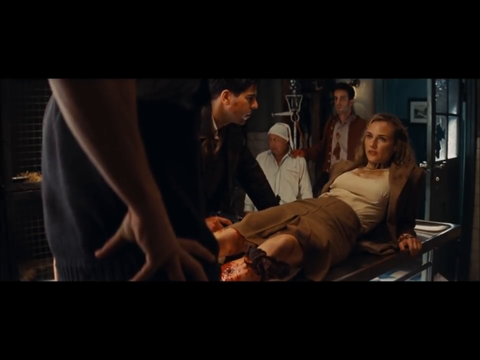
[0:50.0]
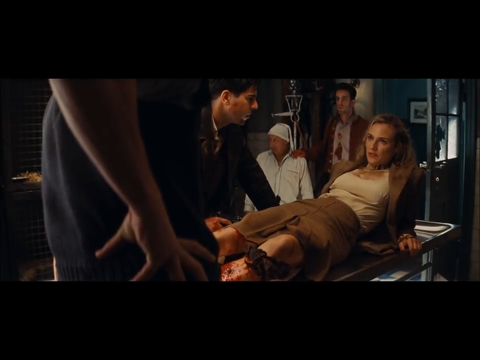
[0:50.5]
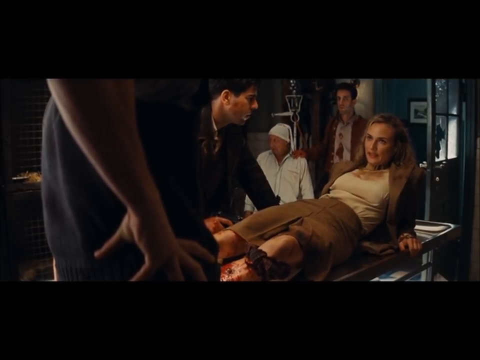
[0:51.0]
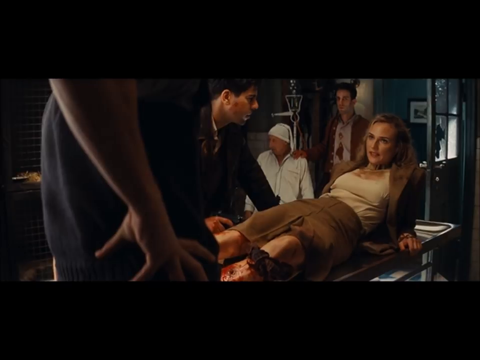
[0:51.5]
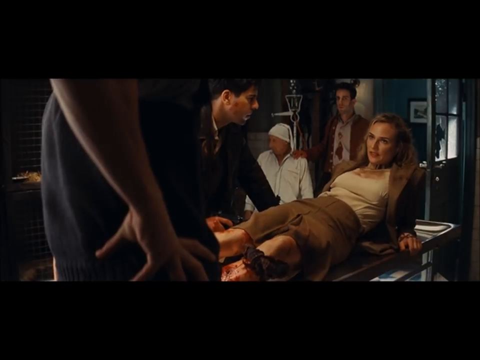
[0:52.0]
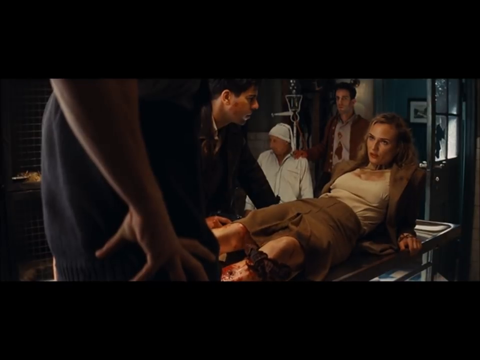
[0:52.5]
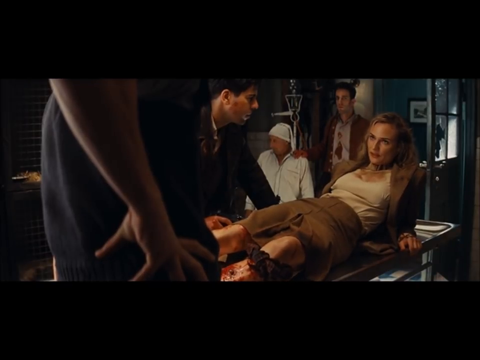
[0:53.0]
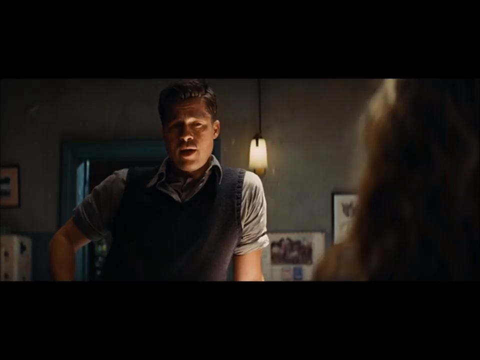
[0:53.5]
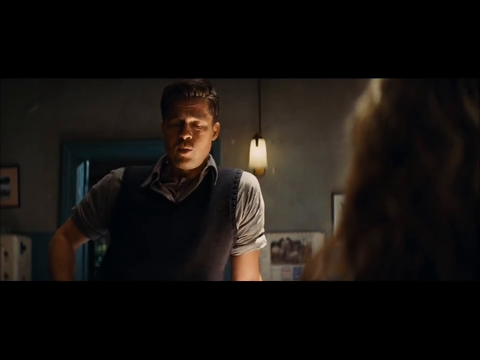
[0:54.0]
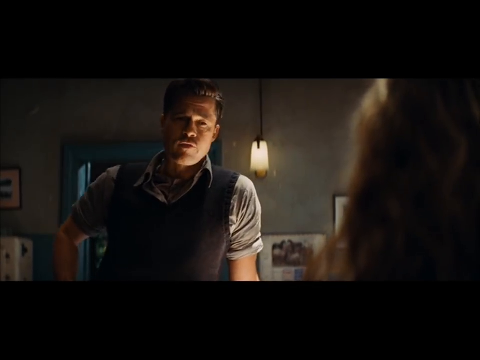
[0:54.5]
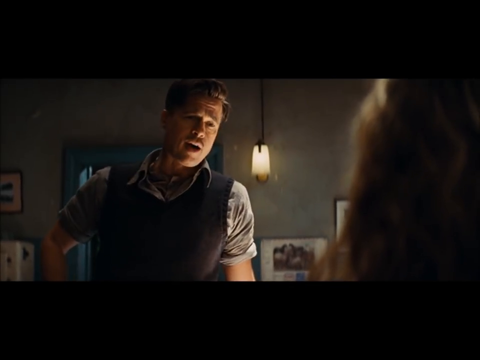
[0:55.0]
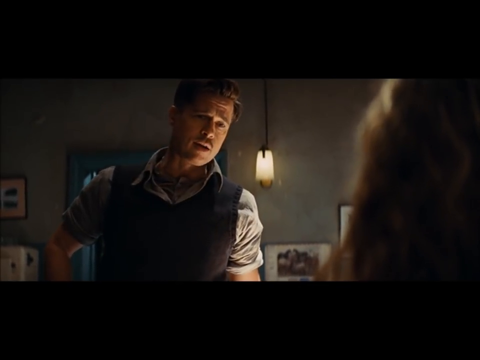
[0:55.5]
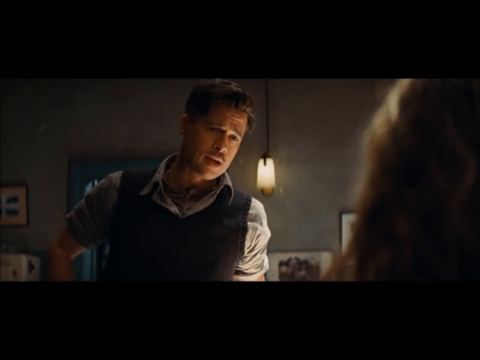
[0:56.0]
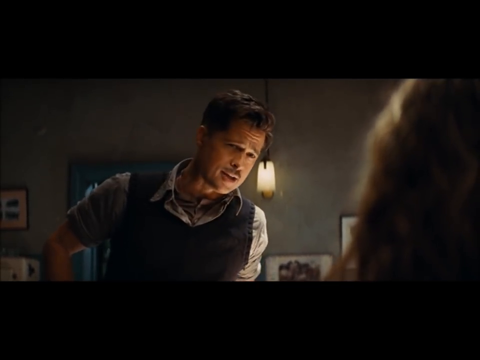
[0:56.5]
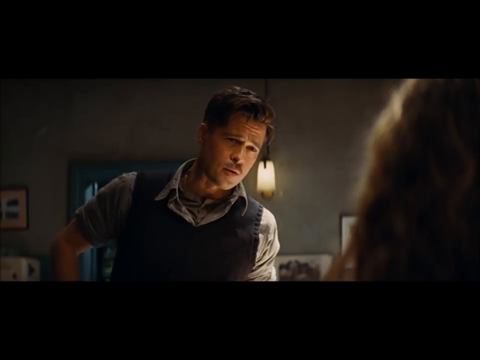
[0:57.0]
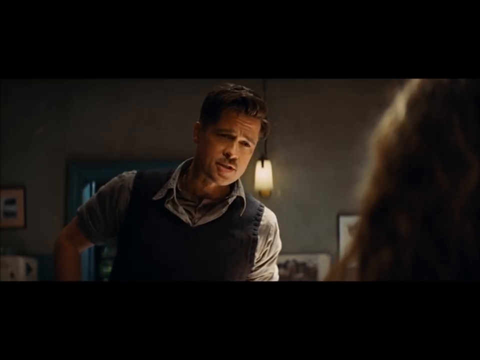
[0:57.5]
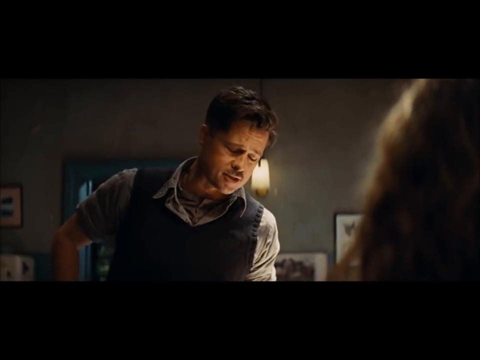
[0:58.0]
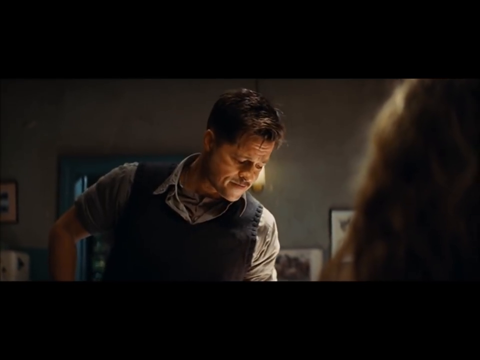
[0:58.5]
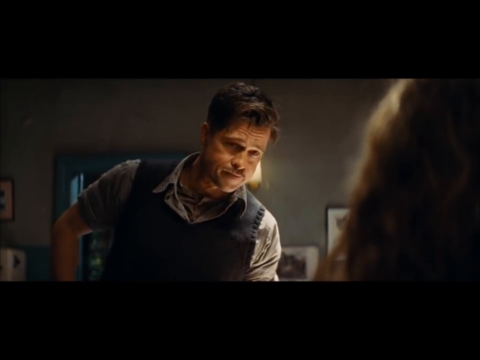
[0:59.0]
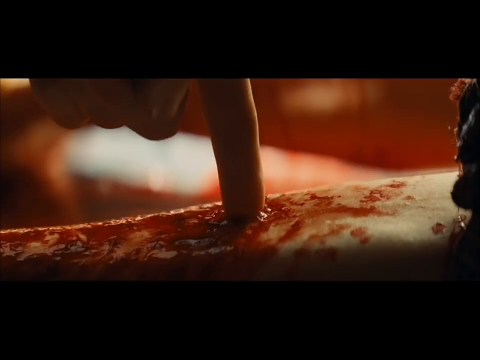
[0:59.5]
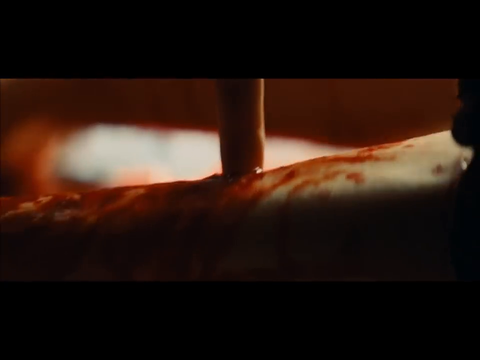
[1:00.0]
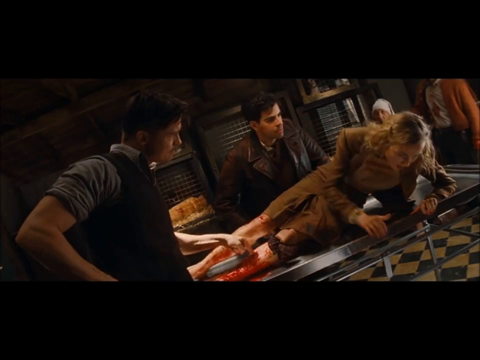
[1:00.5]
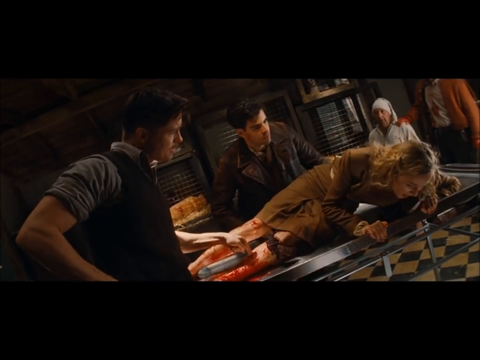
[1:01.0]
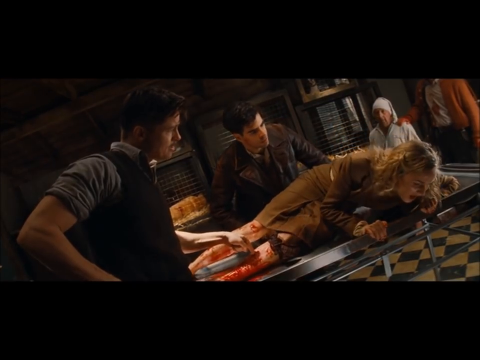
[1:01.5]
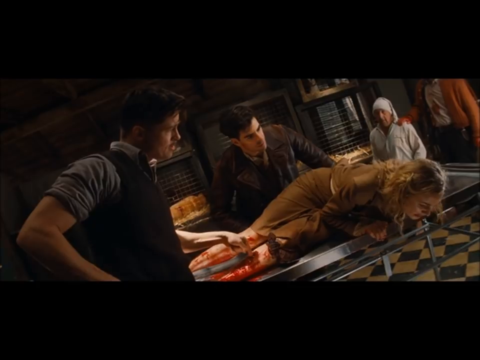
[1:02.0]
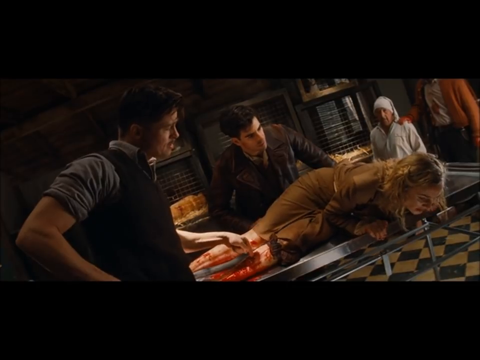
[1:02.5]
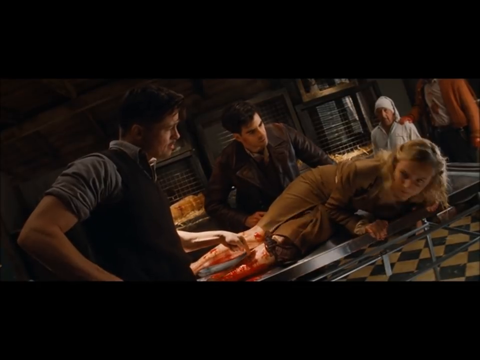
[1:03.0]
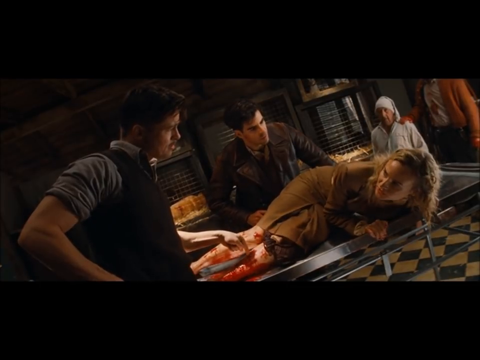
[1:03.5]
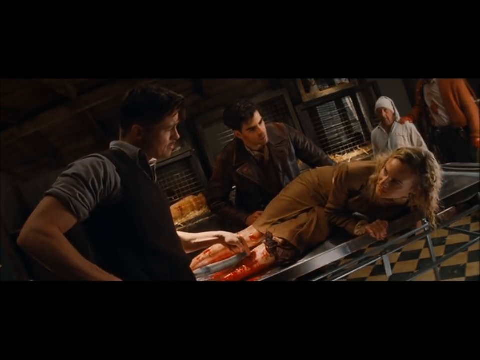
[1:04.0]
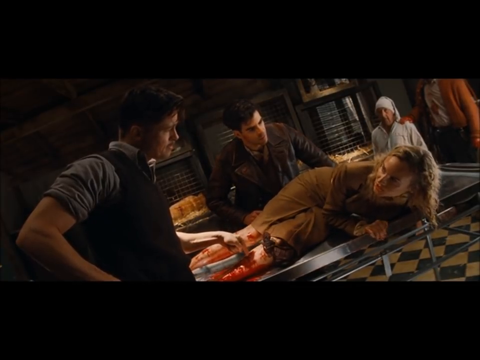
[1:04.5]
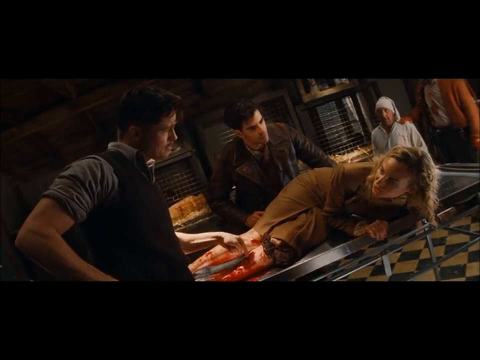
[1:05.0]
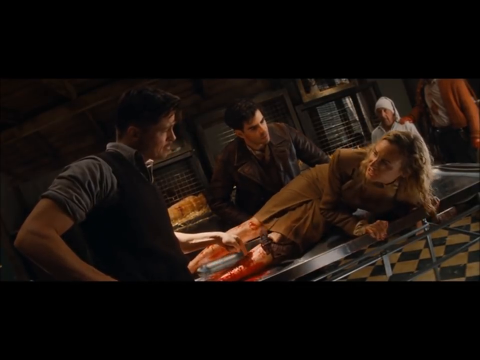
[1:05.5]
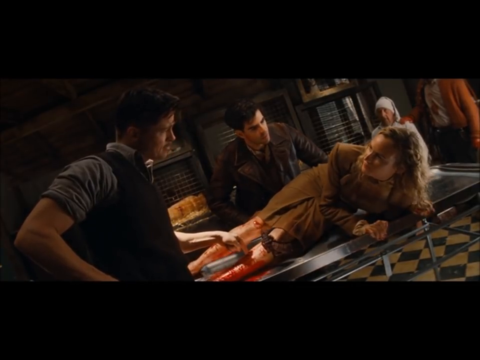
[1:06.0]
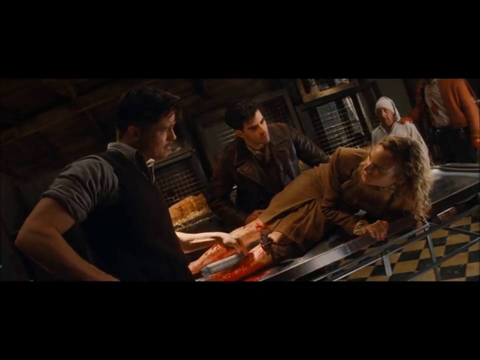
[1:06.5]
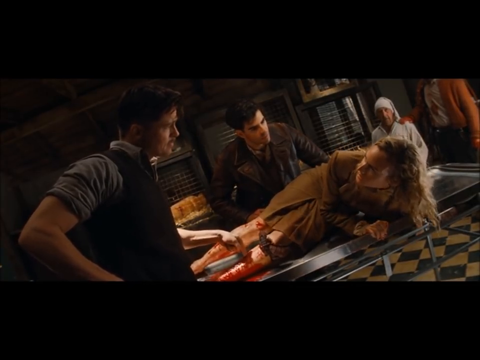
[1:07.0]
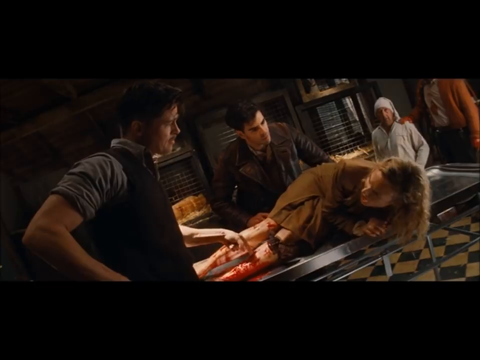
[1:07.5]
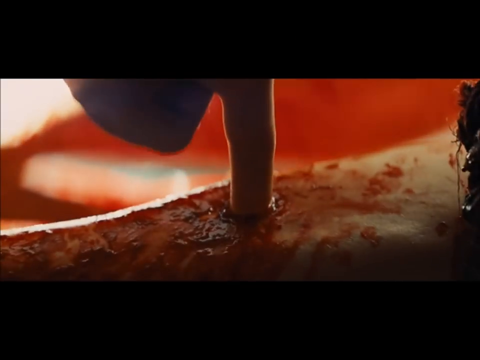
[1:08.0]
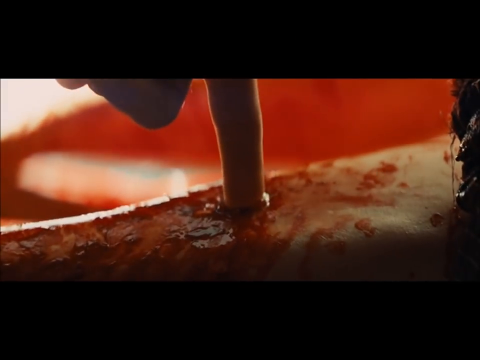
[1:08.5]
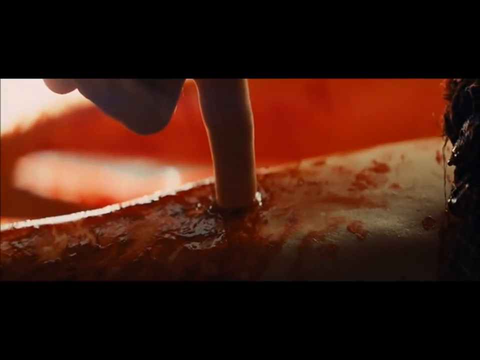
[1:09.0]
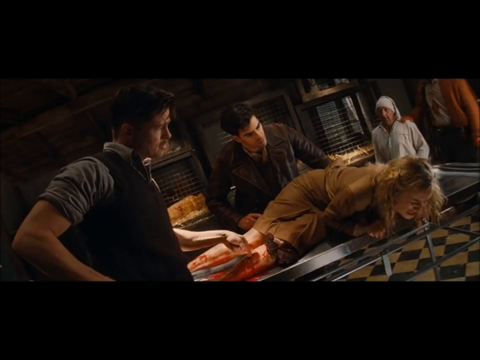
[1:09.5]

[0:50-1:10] In an operating room, a woman wearing a brown suit and brown skirt with a white shirt lies on a metal bed with multiple people around her, interrogating her. The view shifts to the man interrogating her, who tortures her by pressing on an injury on her leg; the leg bleeds a lot, and the woman struggles as he places his finger in the wound. The setting feels like a home, with paintings all around and behind the man. When the view shifts to him talking, a bright lamp is right next to him, on the right of the screen, shining dimly and lighting up the room a little, though the room is still dark. The scene cuts while the woman is struggling.